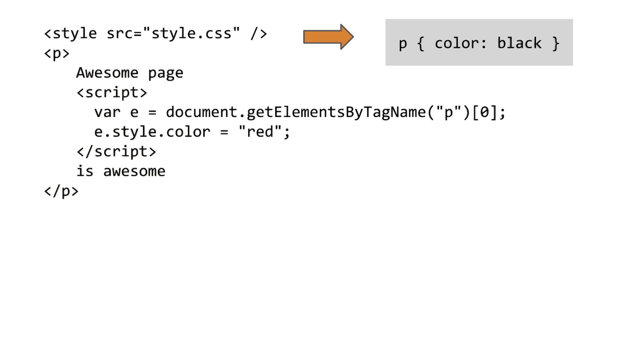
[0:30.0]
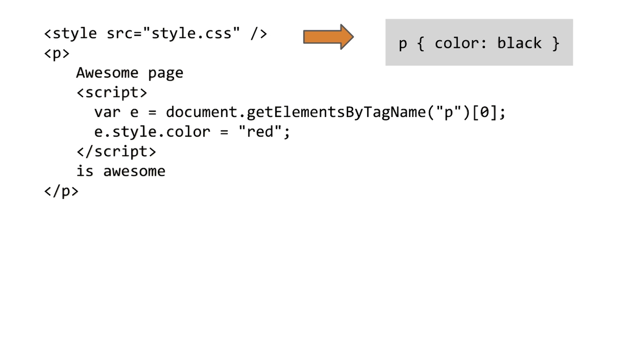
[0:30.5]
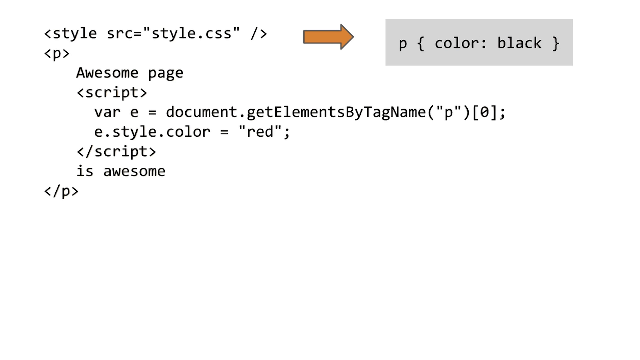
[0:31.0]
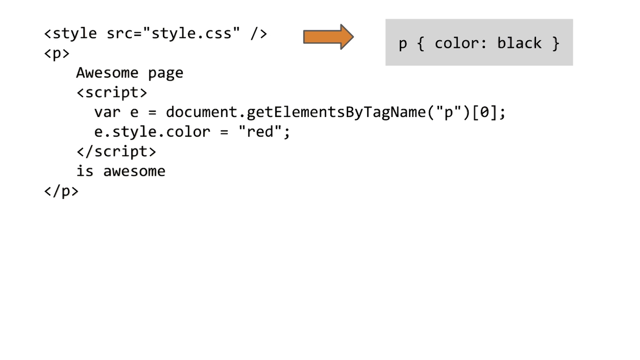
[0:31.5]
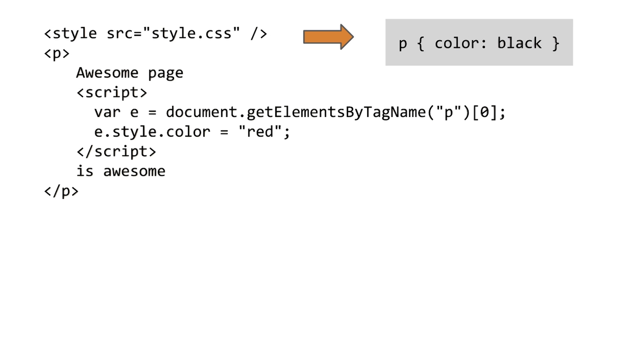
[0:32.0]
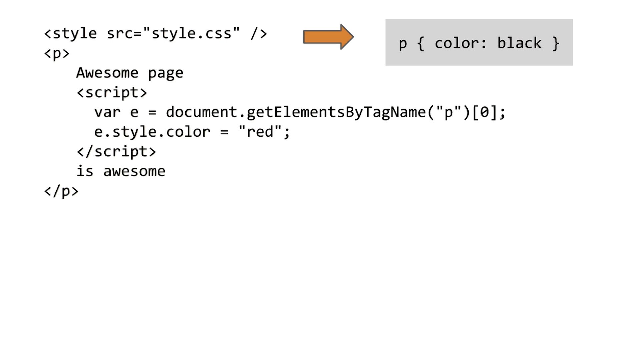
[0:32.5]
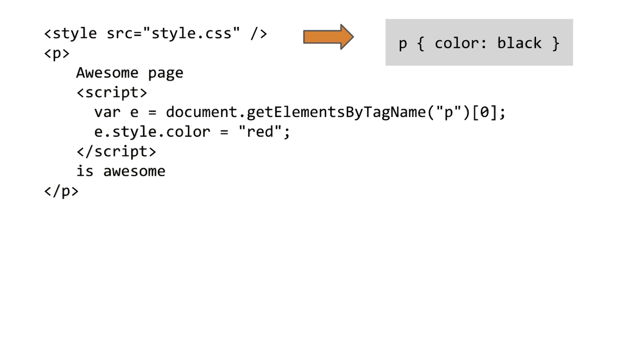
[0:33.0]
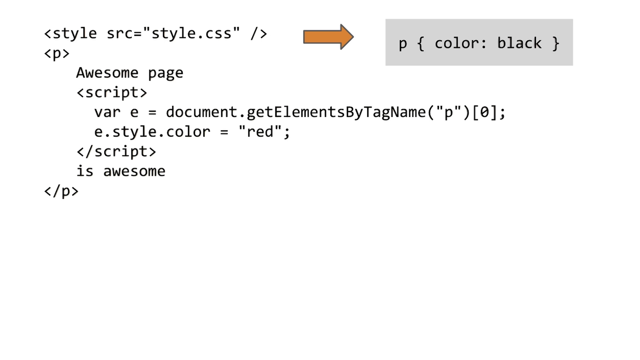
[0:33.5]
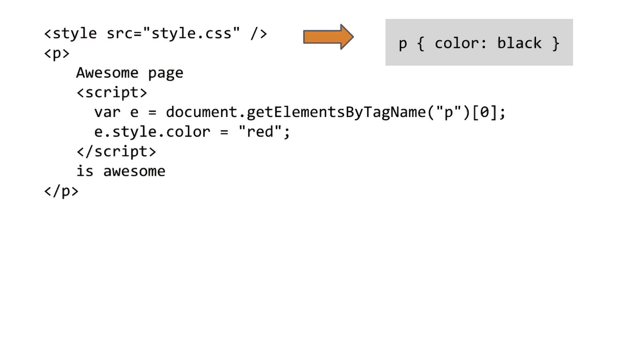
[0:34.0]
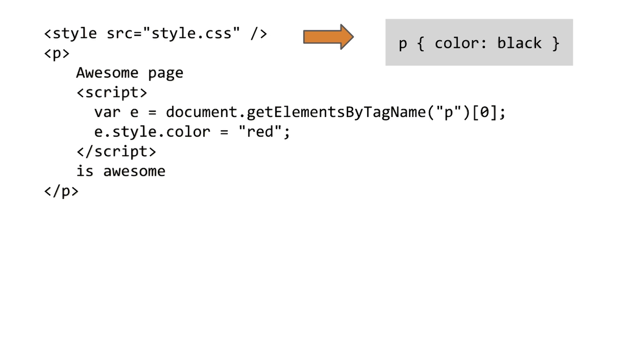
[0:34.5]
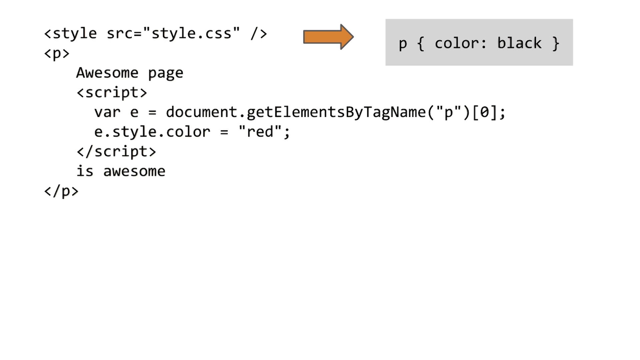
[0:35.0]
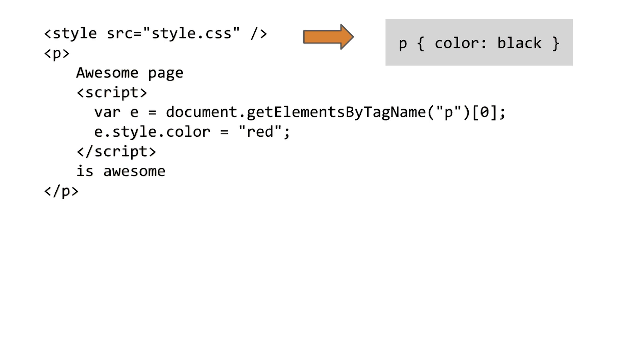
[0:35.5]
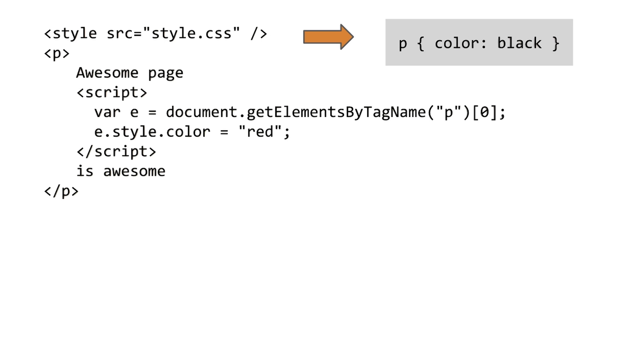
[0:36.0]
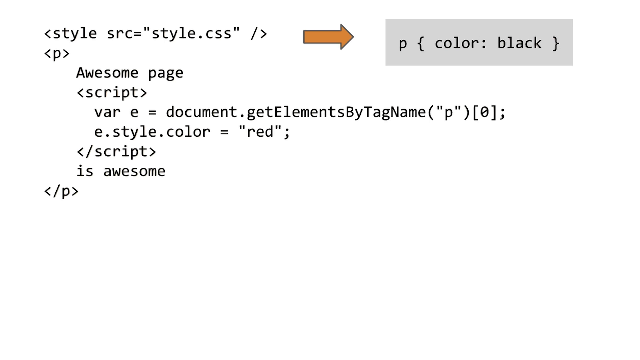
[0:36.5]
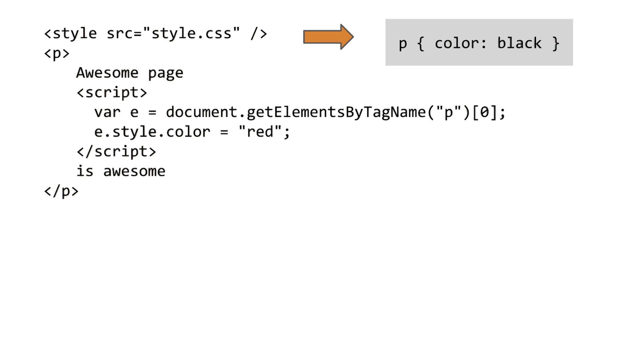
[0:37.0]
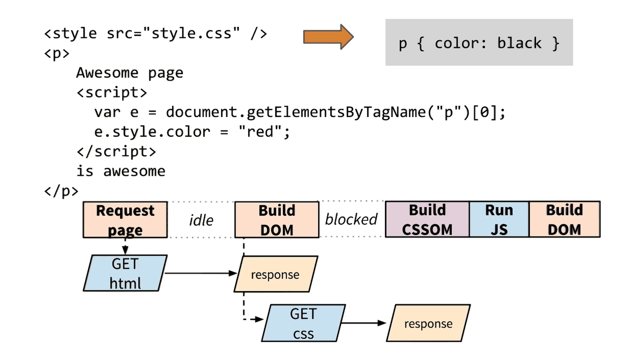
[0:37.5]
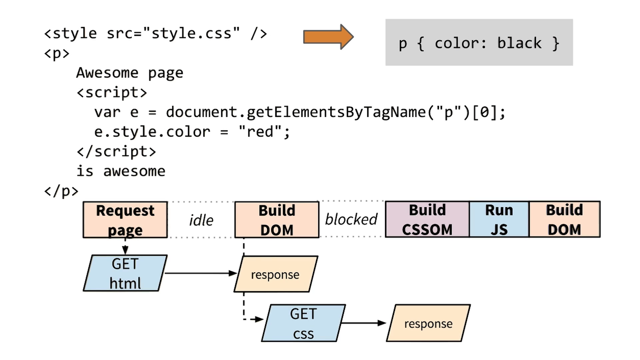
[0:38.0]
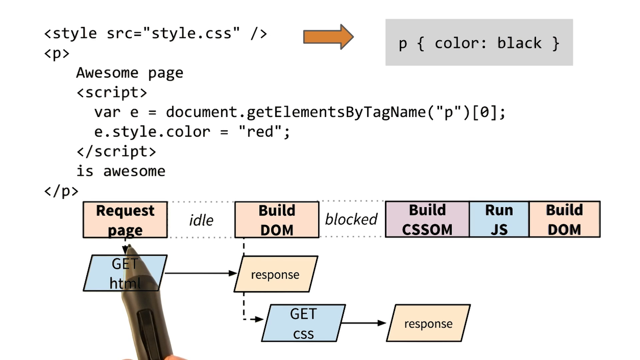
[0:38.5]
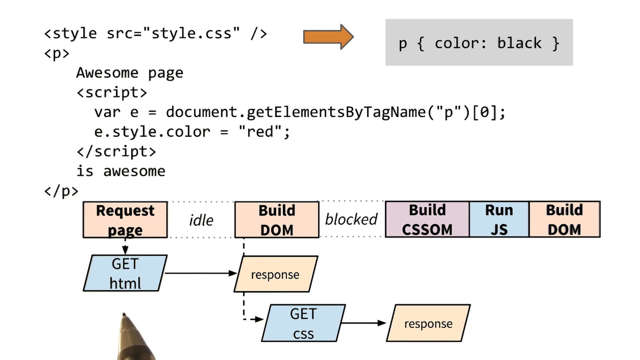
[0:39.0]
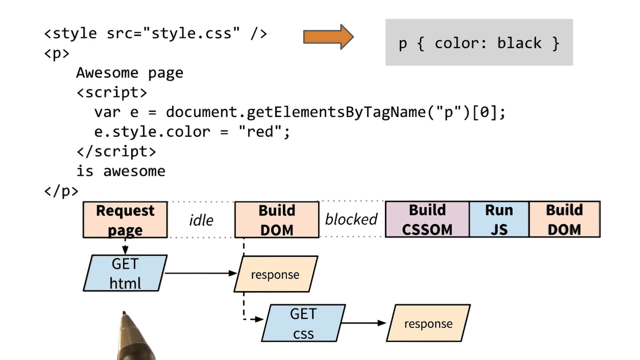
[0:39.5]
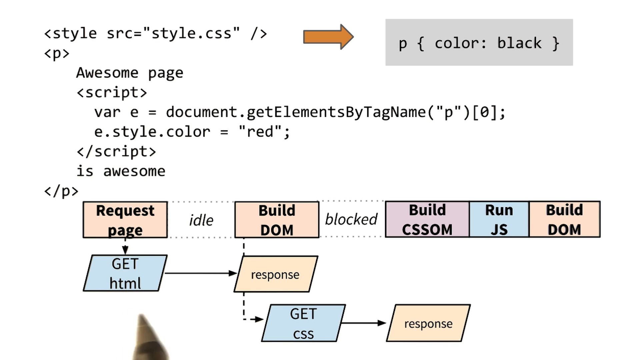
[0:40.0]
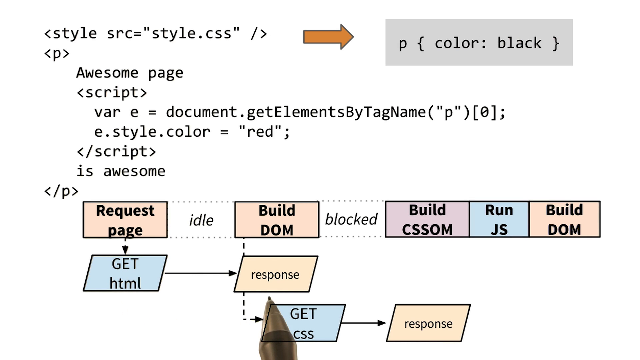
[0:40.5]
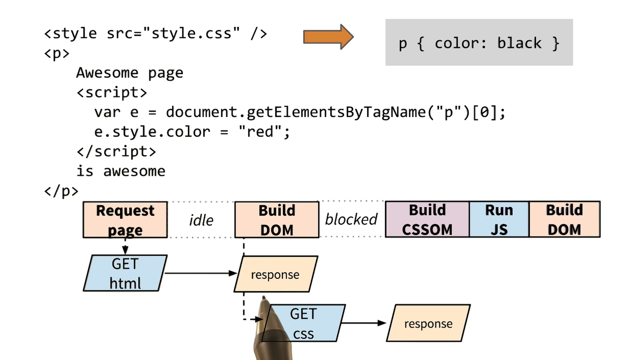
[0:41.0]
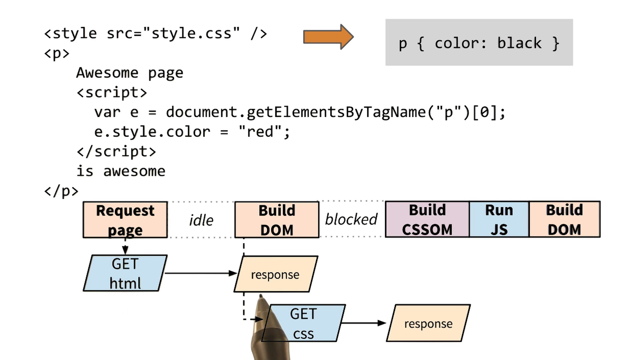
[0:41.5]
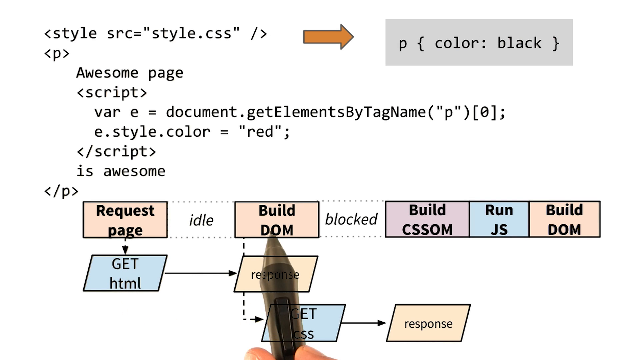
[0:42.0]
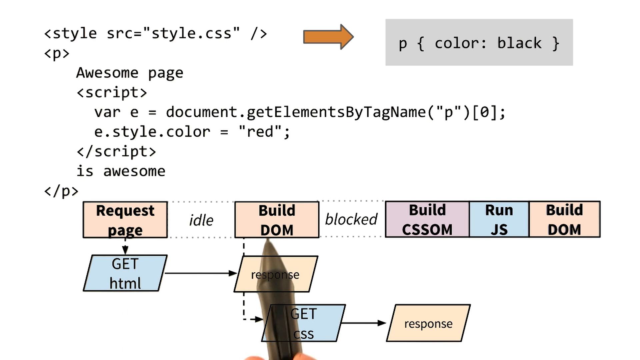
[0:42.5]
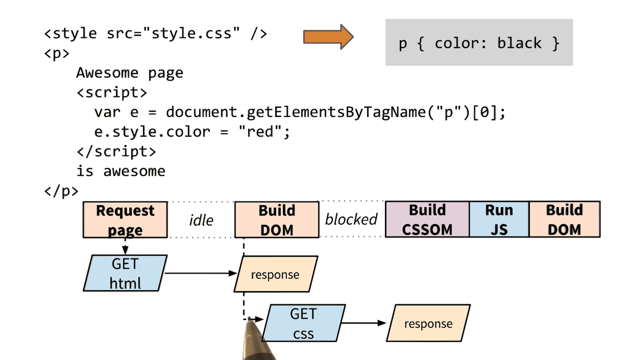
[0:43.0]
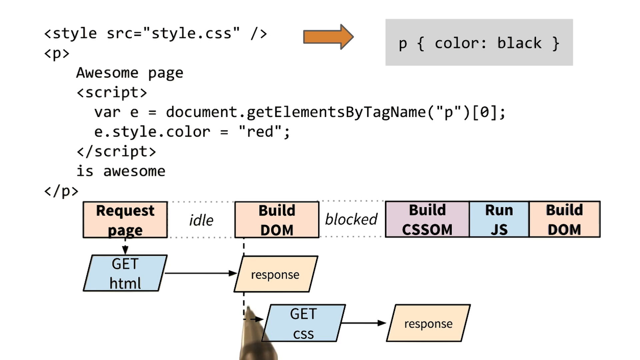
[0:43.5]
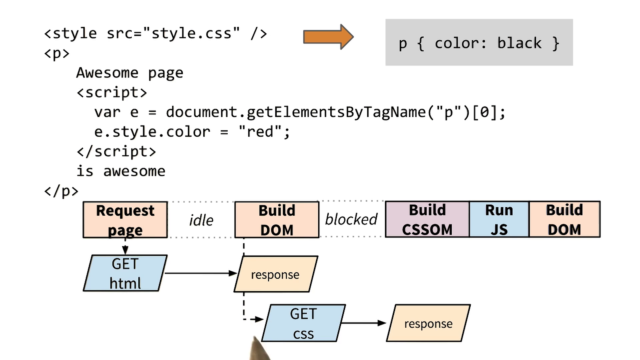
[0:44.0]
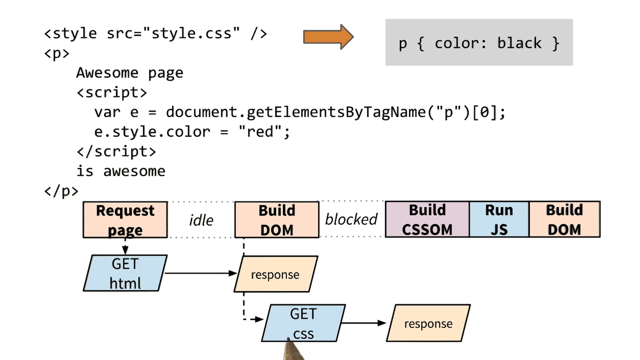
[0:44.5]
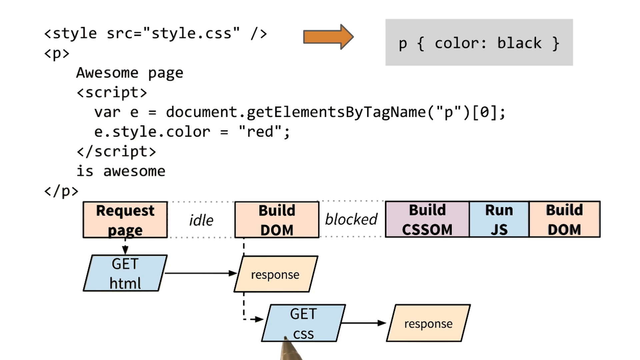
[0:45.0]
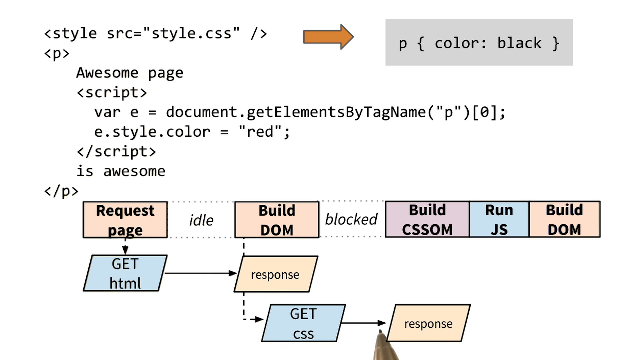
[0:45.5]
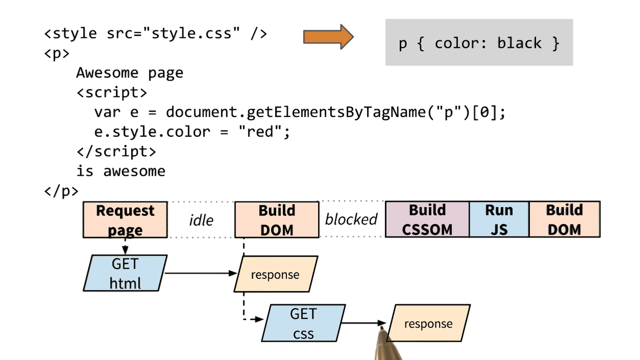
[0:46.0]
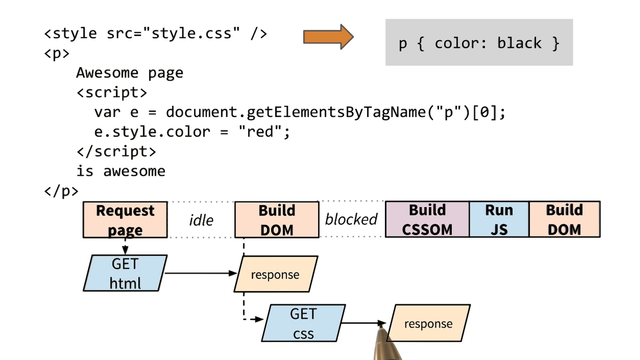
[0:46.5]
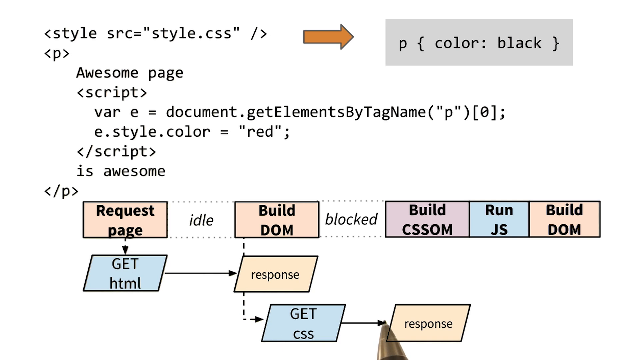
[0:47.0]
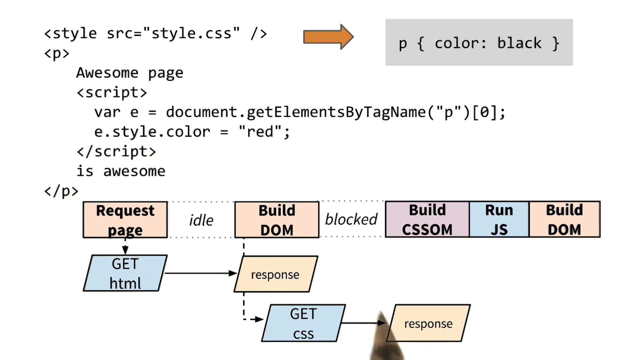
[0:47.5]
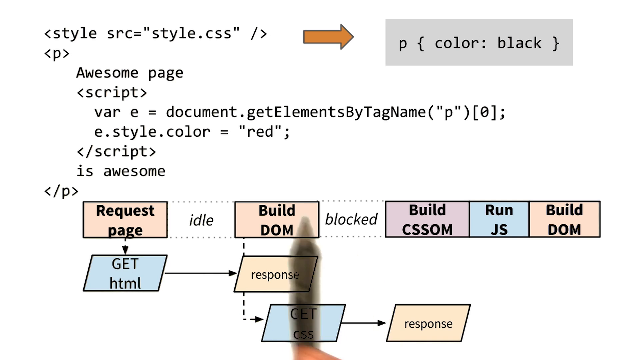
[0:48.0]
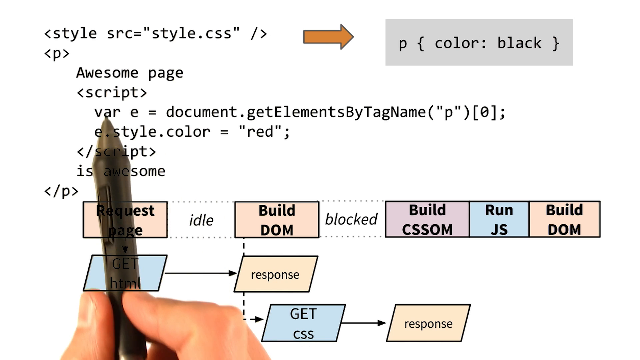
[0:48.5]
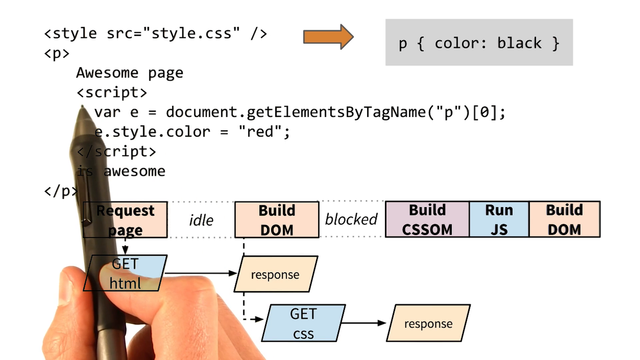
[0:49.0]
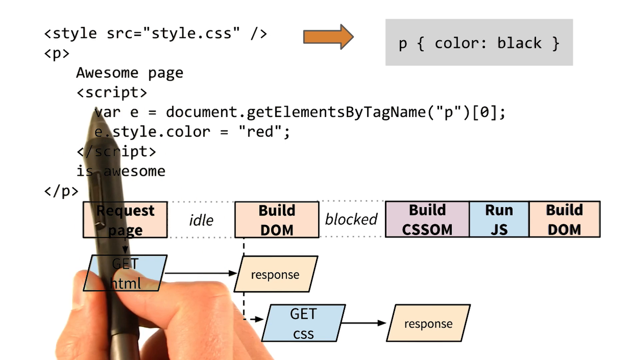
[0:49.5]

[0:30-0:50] The white background and the written code with the yellow arrow are still there, and something appears underneath that the man points to with his pen. It is like a map that starts with requestPage, goes into getHTML, then into response; from there a dotted line leads to buildDom, and a dotted arrow leads to getCSS, which ends with another arrow into response. Beside buildDom it says "blocked", and there are three blocks together: buildCSSOM, runJS and buildDom. The man also points at some parts of the code, probably explaining how to use or interpret it.